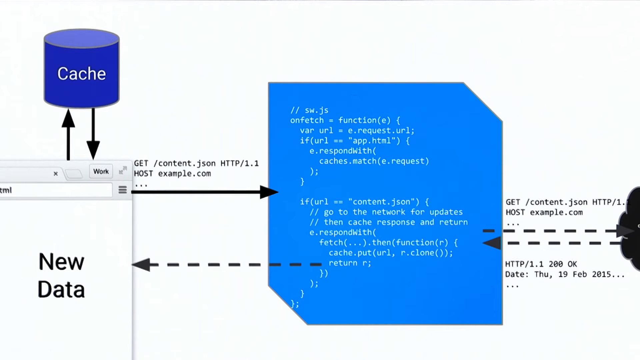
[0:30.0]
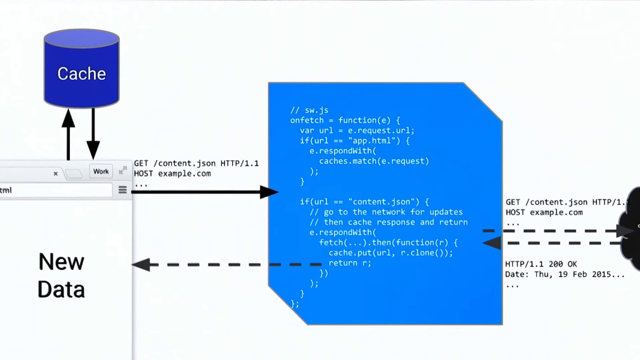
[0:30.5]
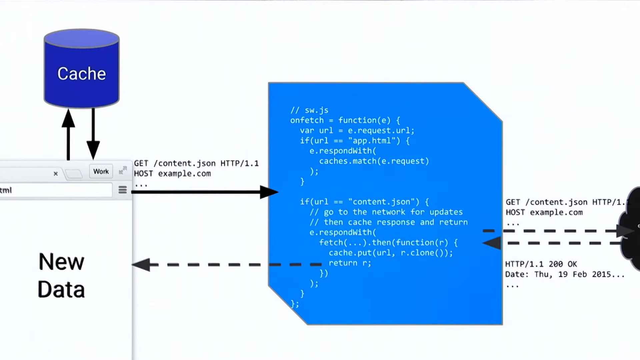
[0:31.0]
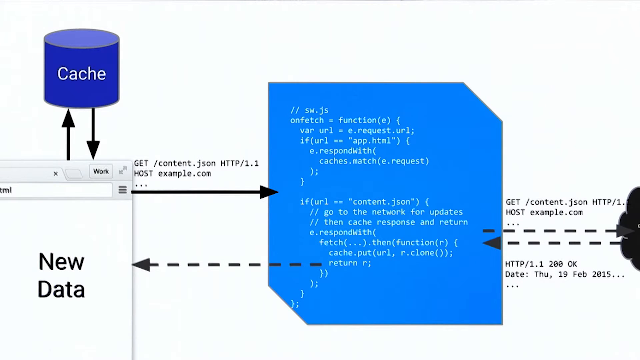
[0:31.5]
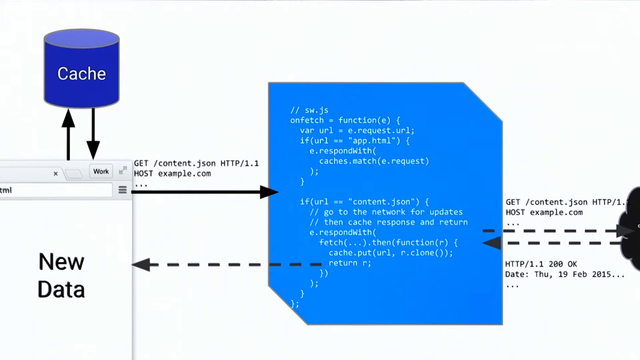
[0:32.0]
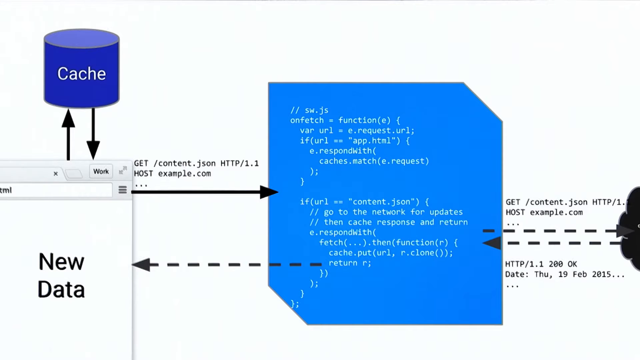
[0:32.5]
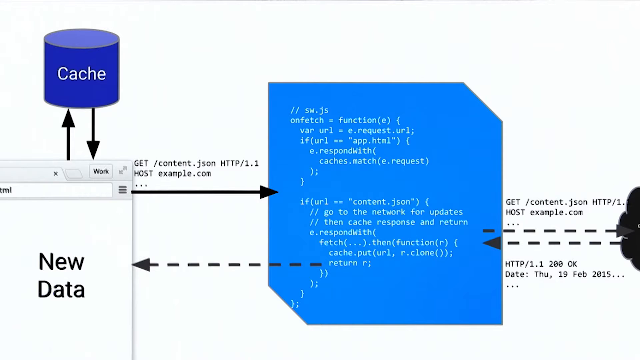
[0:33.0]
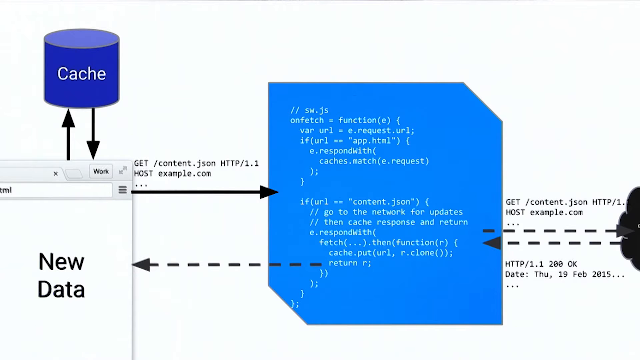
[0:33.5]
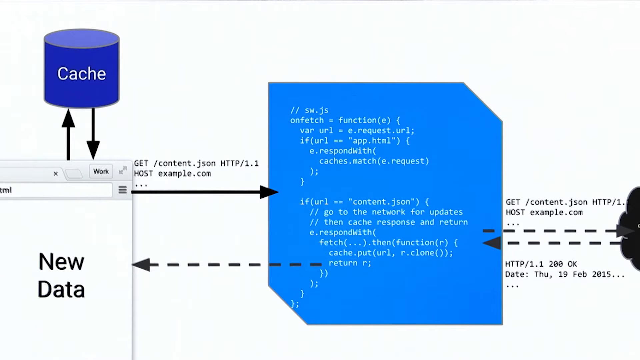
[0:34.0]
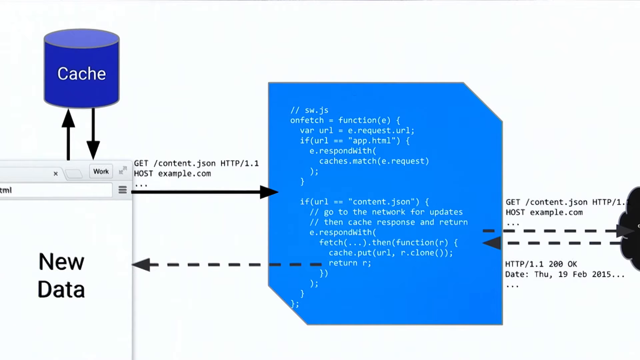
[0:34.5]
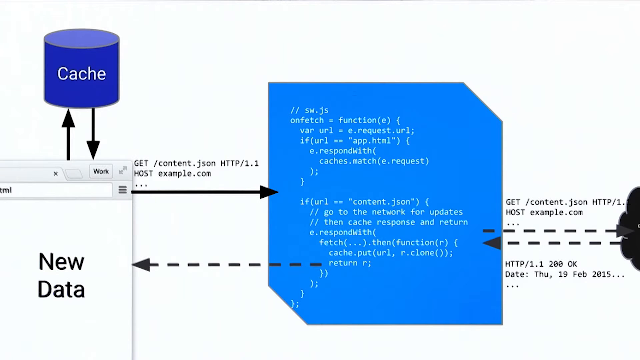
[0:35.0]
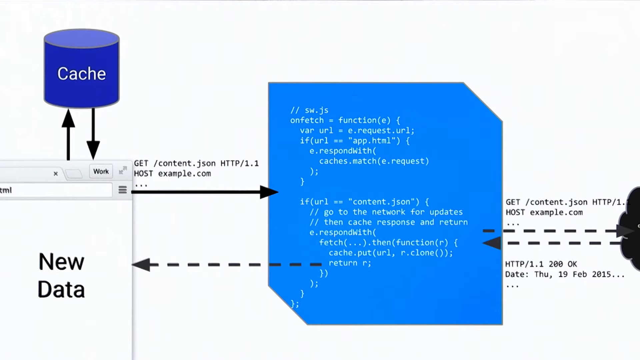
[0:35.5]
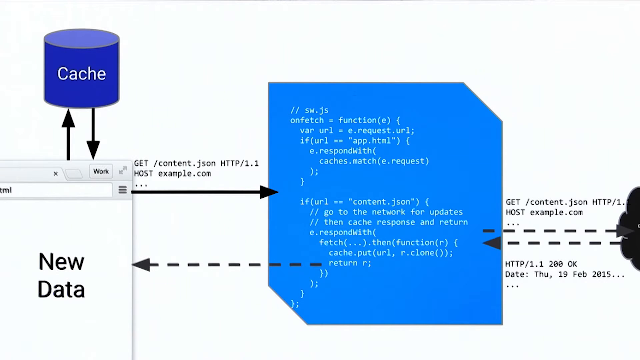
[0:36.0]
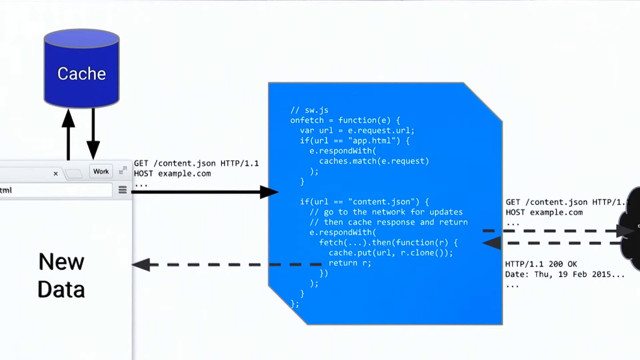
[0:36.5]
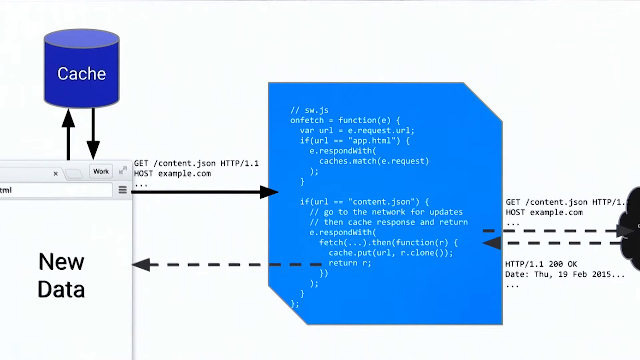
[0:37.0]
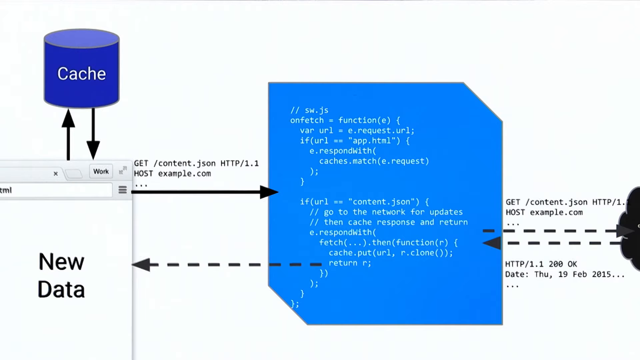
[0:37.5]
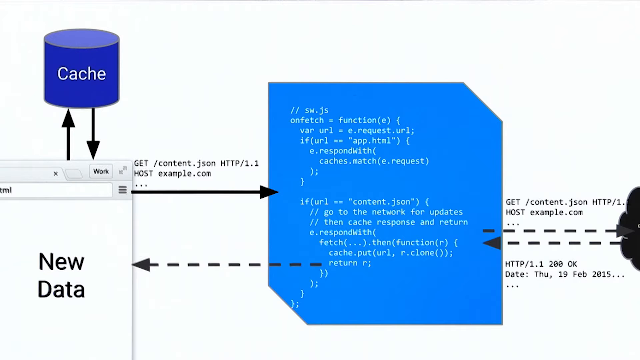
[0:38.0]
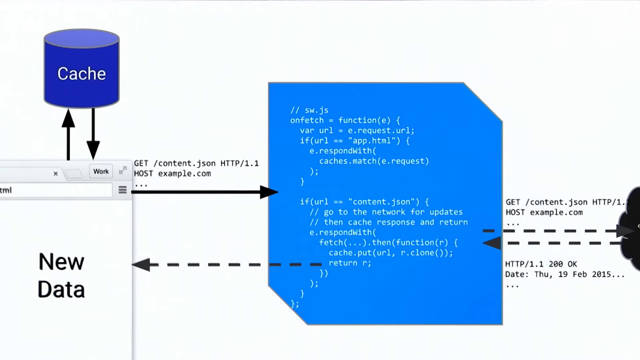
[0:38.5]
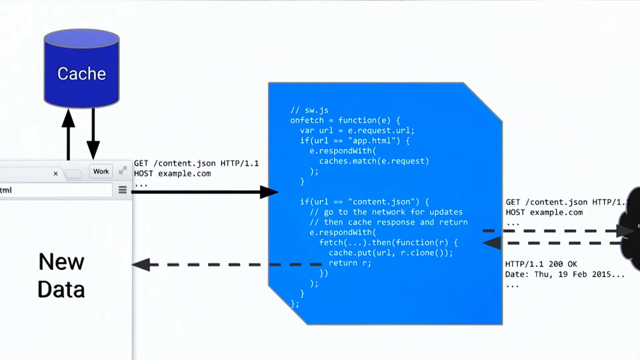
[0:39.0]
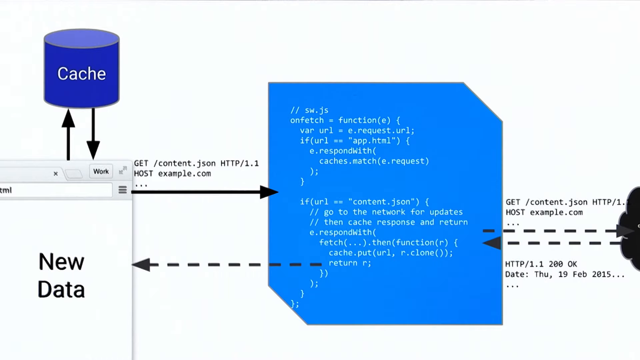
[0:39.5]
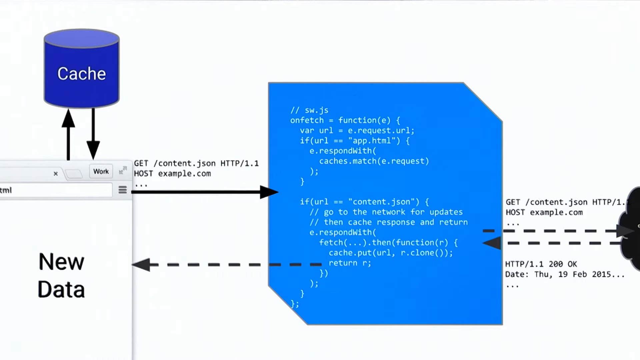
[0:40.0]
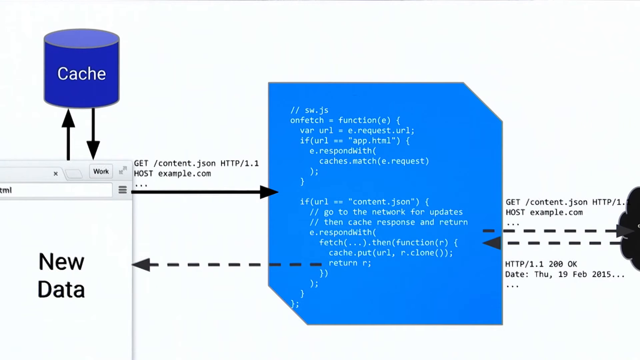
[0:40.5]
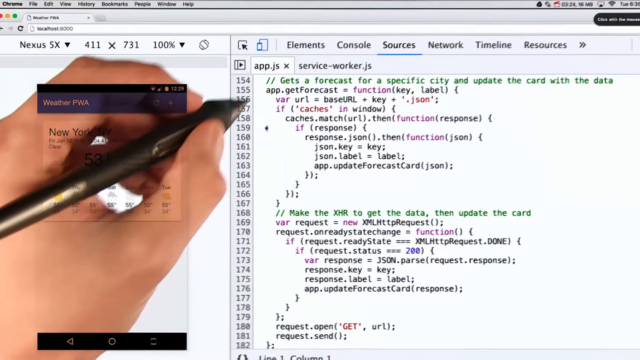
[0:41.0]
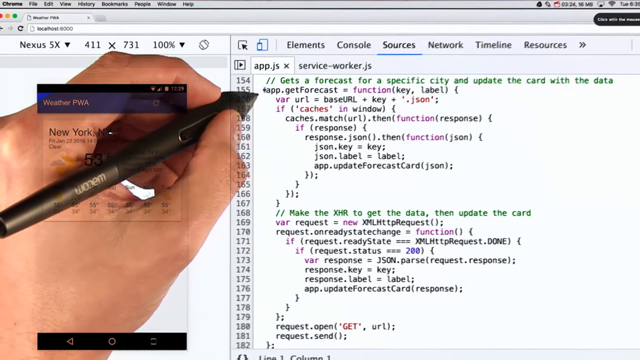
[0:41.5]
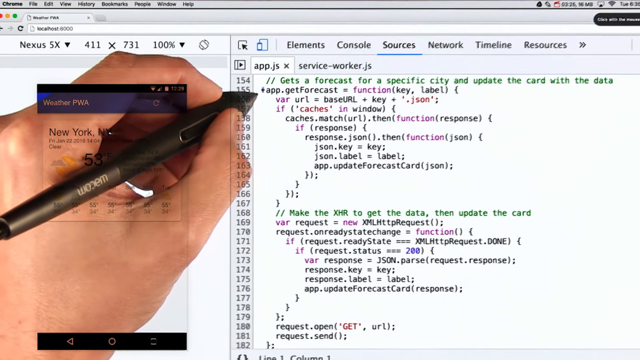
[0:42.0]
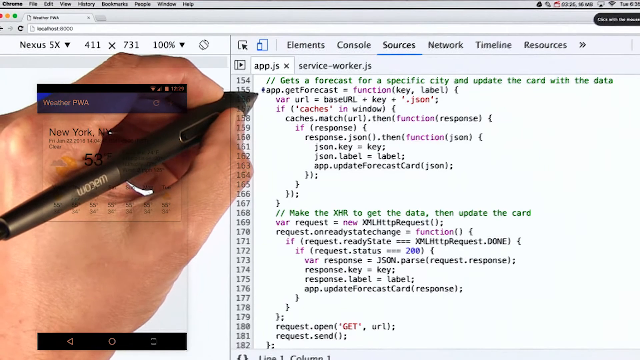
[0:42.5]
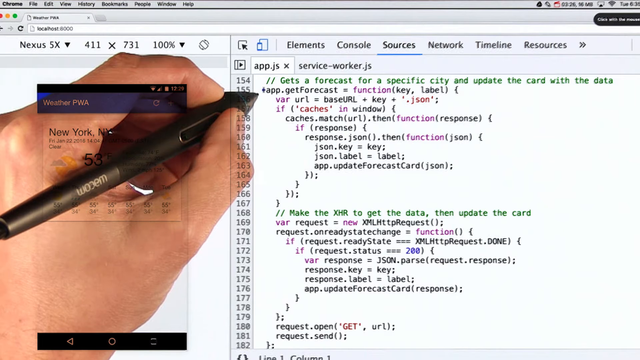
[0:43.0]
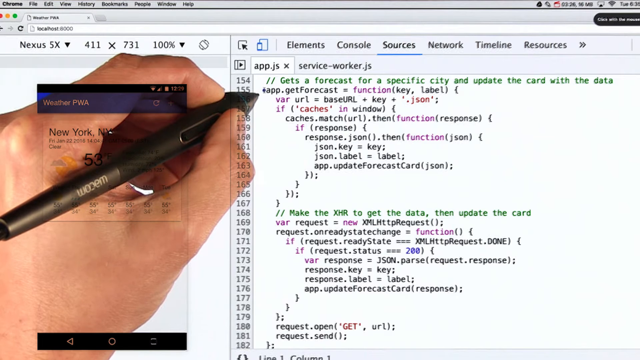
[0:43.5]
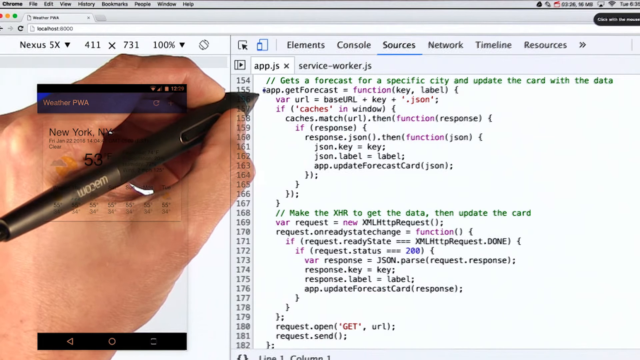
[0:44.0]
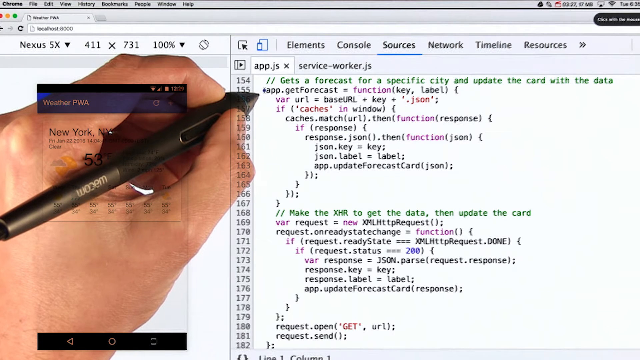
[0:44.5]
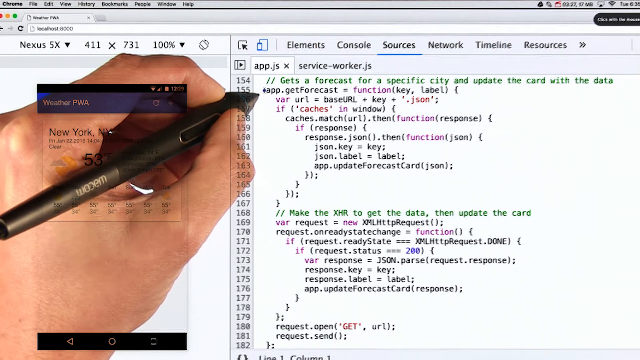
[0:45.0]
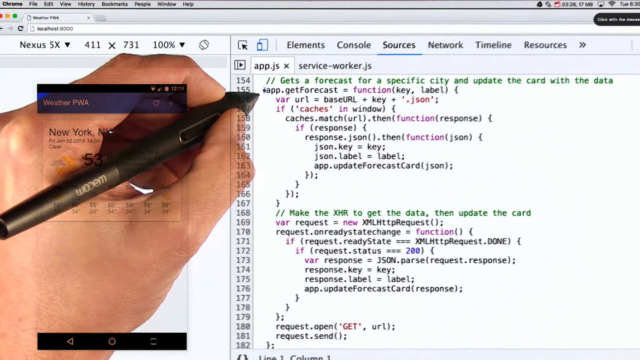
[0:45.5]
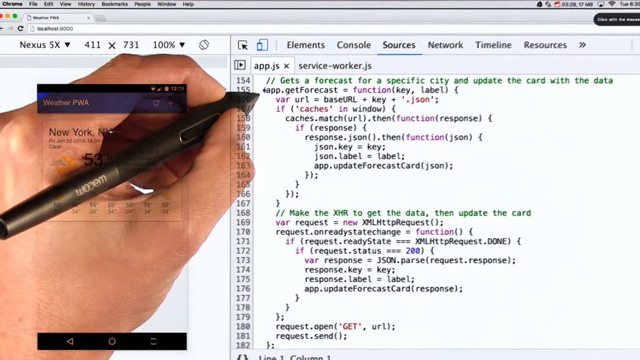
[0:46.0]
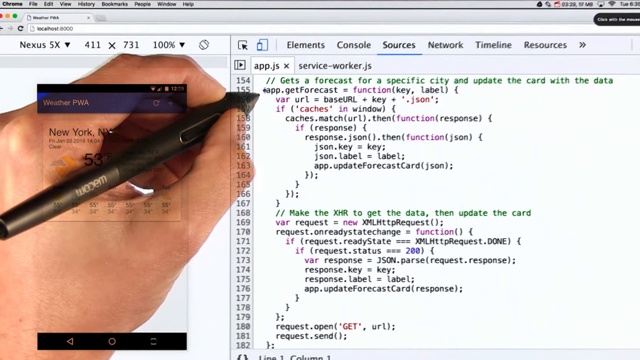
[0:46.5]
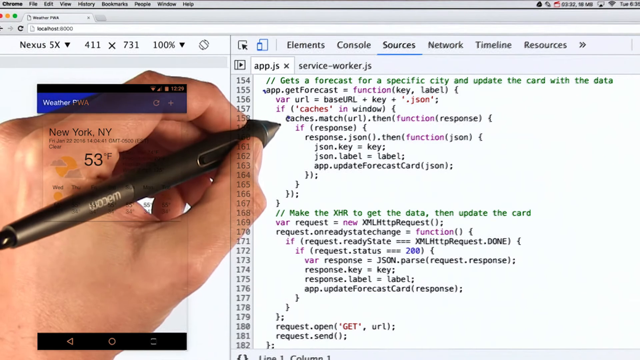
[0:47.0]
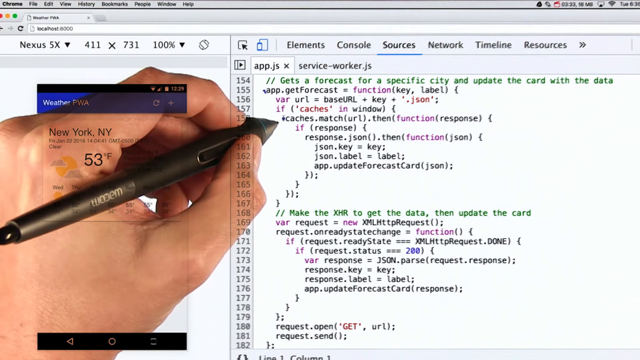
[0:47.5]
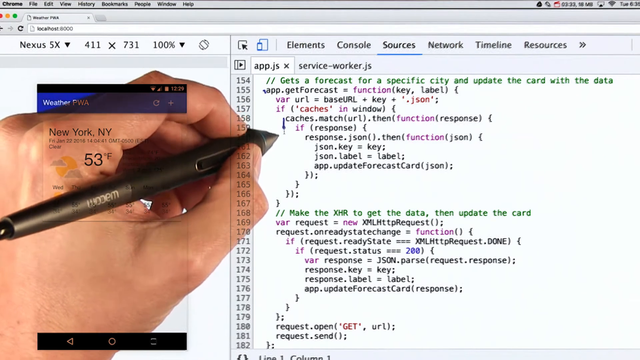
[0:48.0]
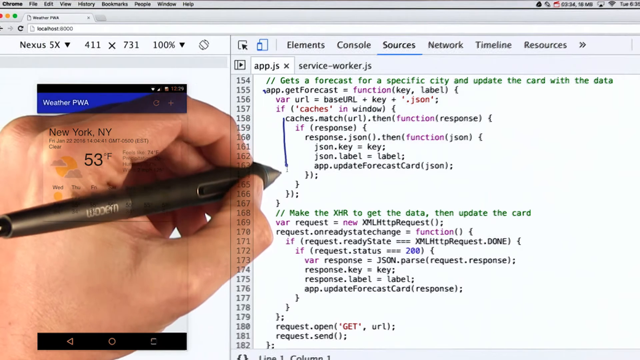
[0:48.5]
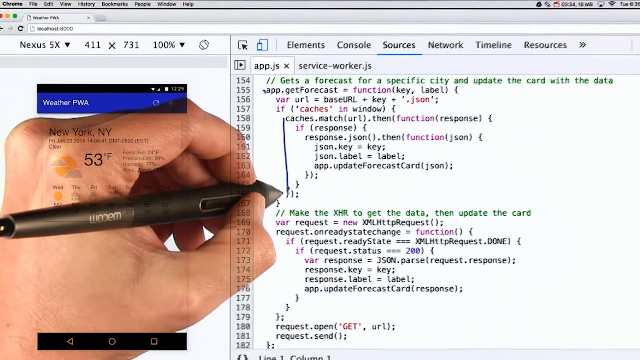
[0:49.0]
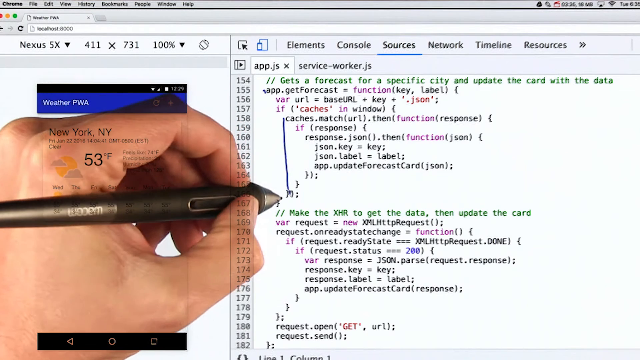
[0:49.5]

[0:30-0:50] Computer programming code is in the middle of the page on a blue shape, kind of like a rectangle with two edges cut off. A cache in a cylinder is in the upper left-hand corner, and at the bottom left a box says "new data". Dotted and solid lines run to and from the programming area and the new data area. There is also something black, kind of curved, on the right-hand side. Suddenly a person's hand pops up holding a pen; it looks like they are pointing to different areas of the code, and they draw a line connecting two areas on the screen.